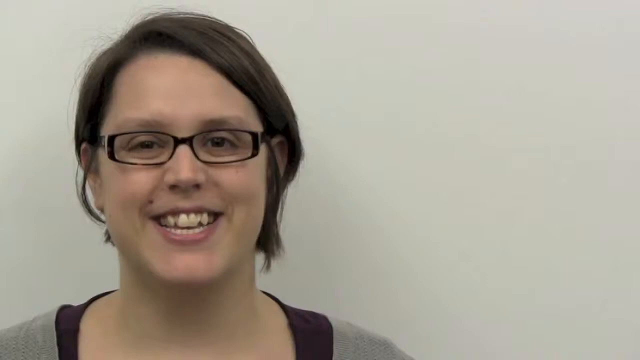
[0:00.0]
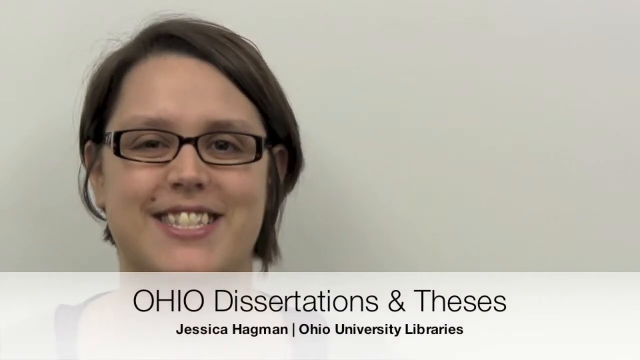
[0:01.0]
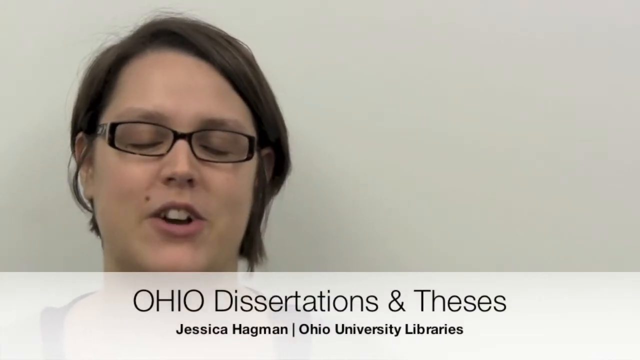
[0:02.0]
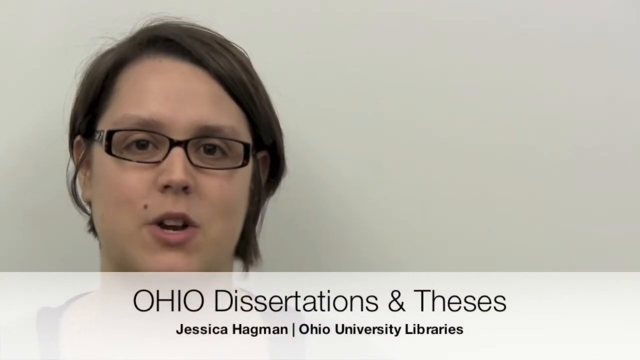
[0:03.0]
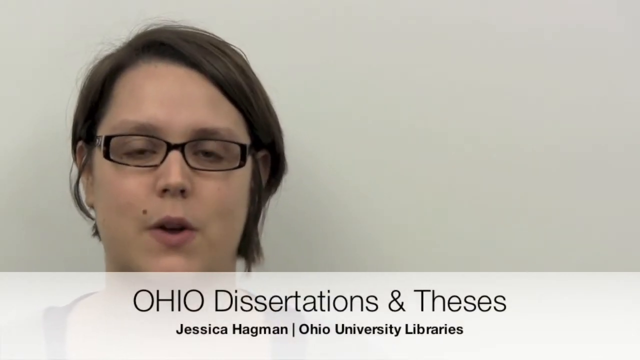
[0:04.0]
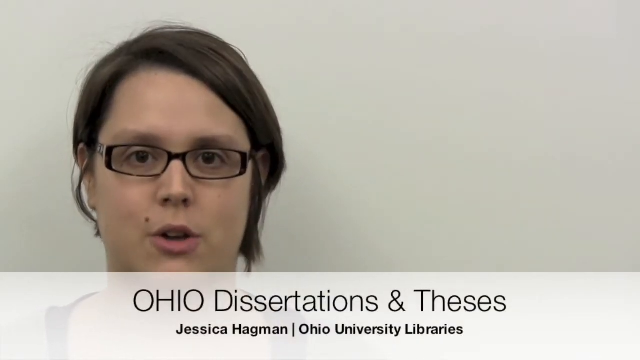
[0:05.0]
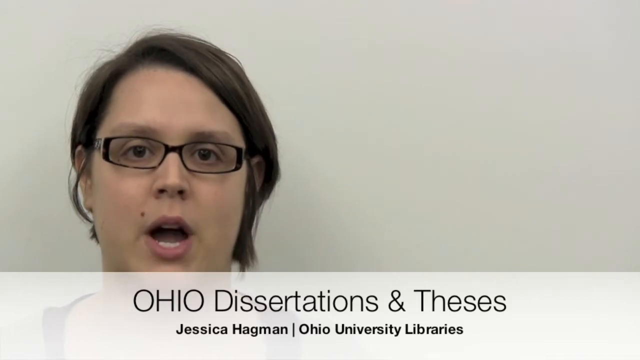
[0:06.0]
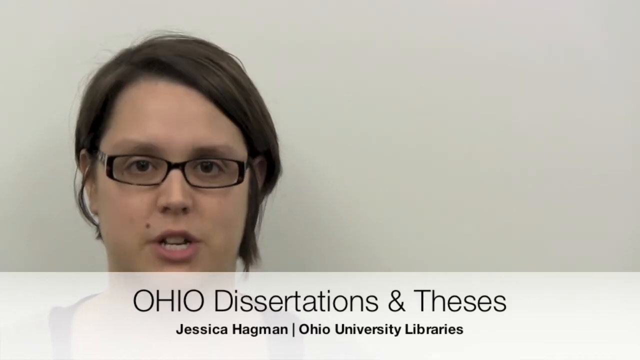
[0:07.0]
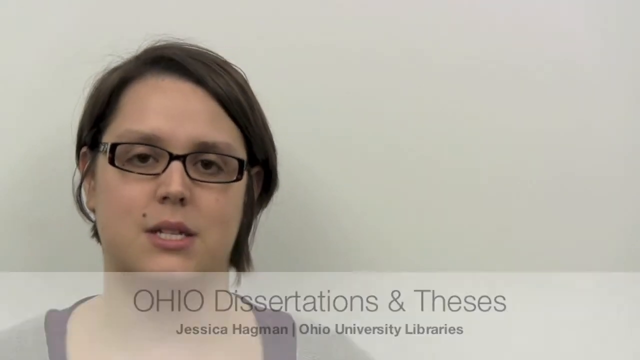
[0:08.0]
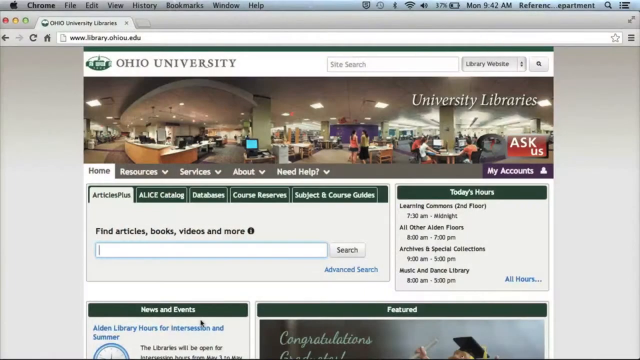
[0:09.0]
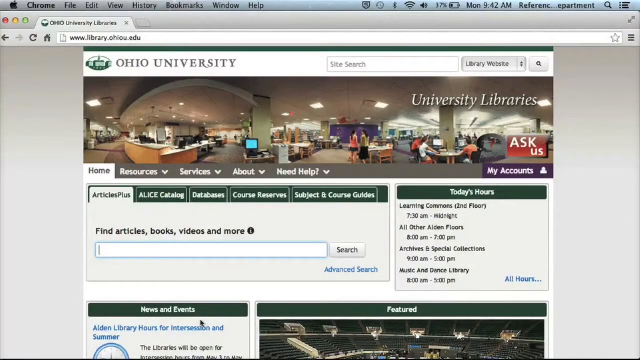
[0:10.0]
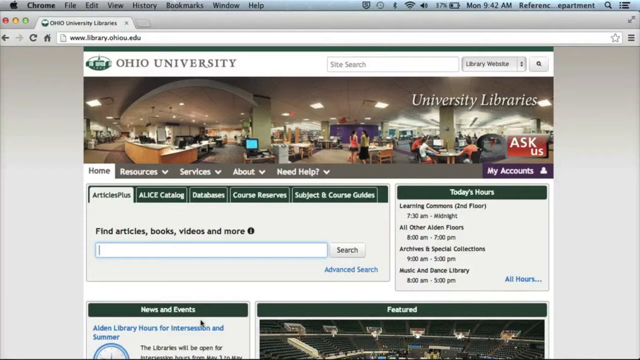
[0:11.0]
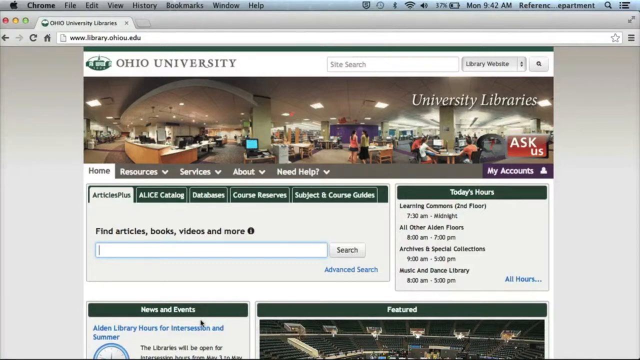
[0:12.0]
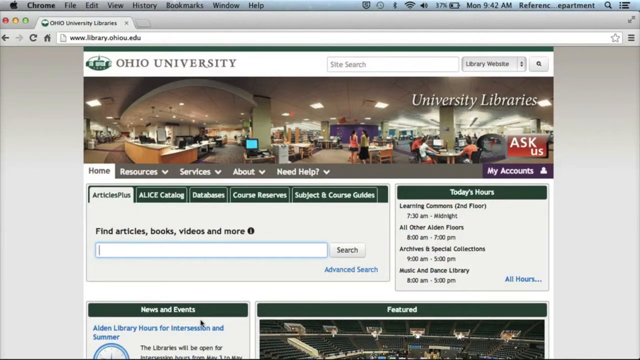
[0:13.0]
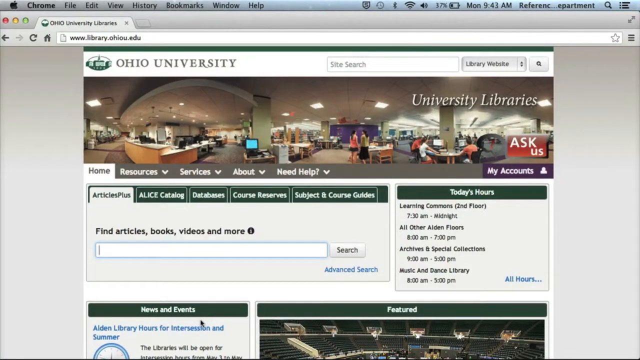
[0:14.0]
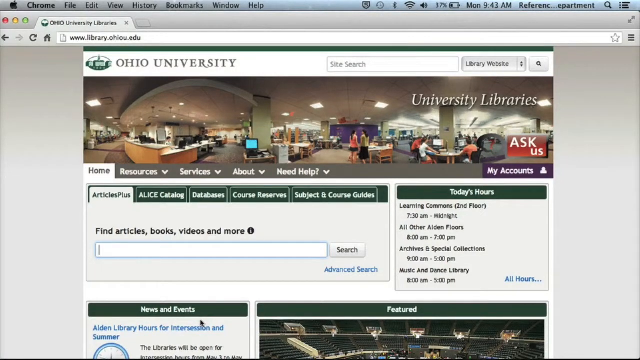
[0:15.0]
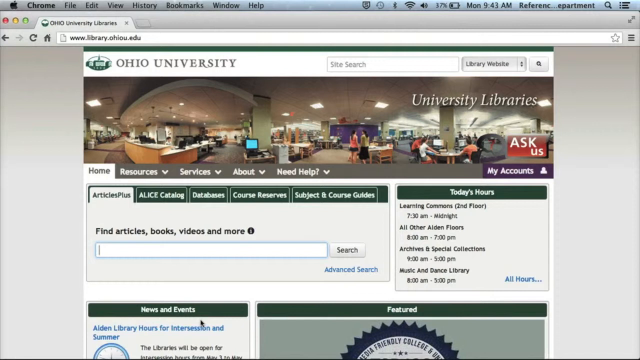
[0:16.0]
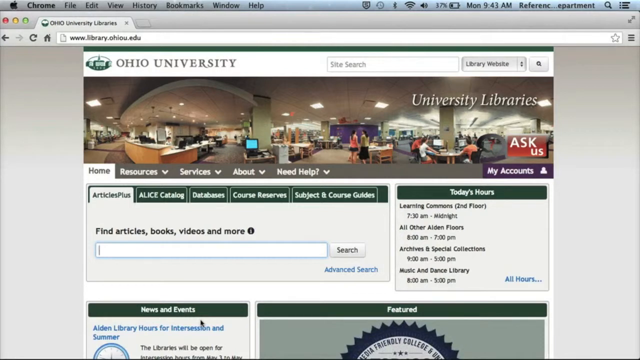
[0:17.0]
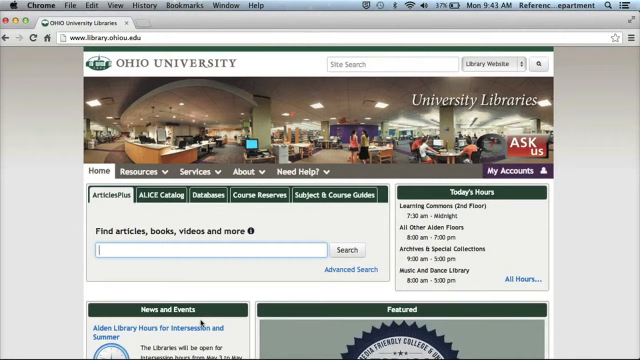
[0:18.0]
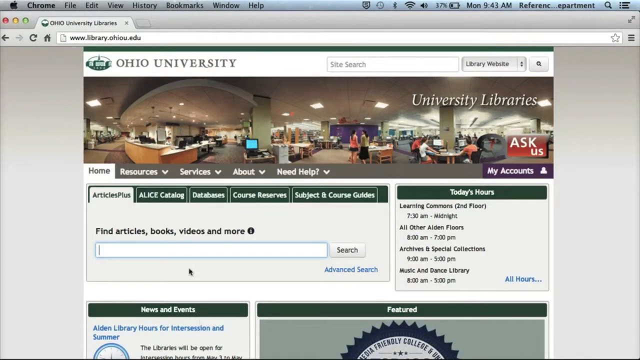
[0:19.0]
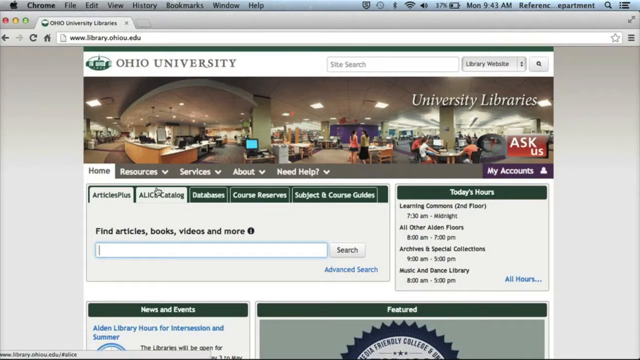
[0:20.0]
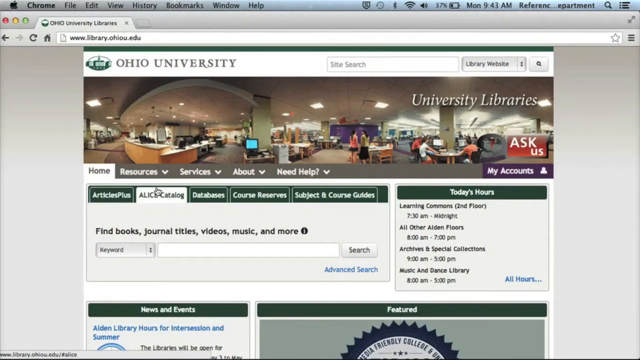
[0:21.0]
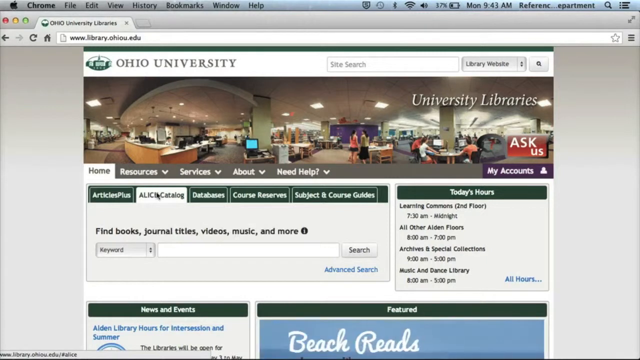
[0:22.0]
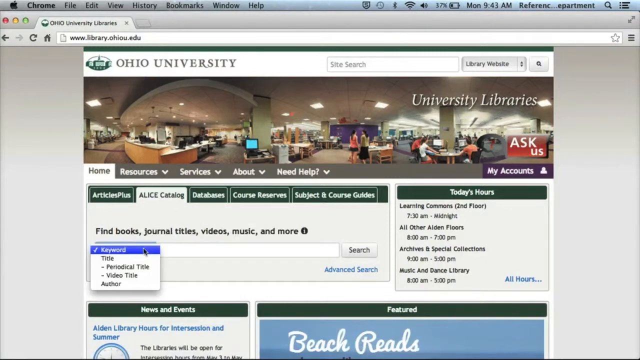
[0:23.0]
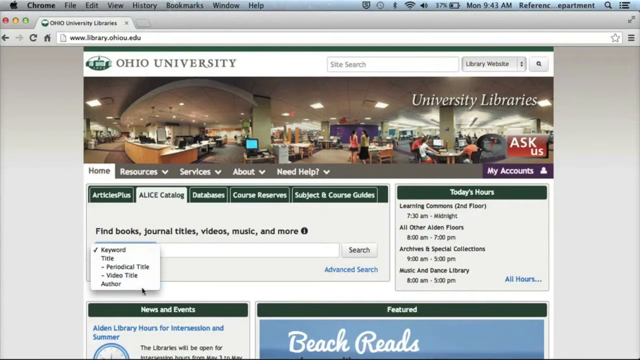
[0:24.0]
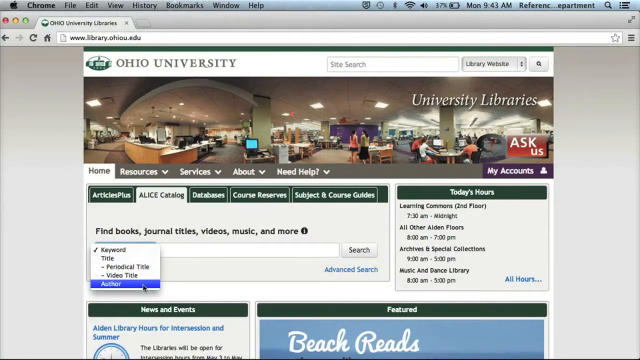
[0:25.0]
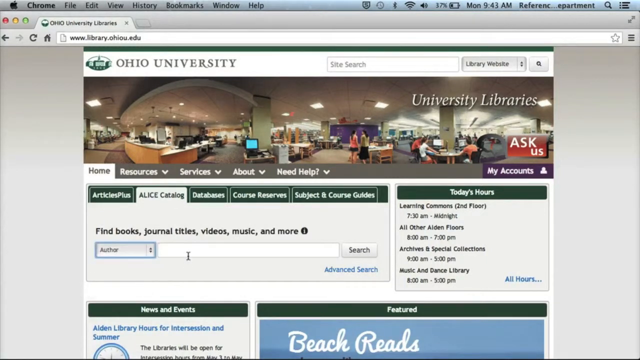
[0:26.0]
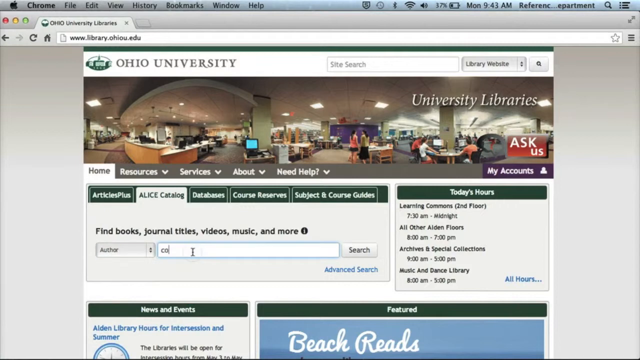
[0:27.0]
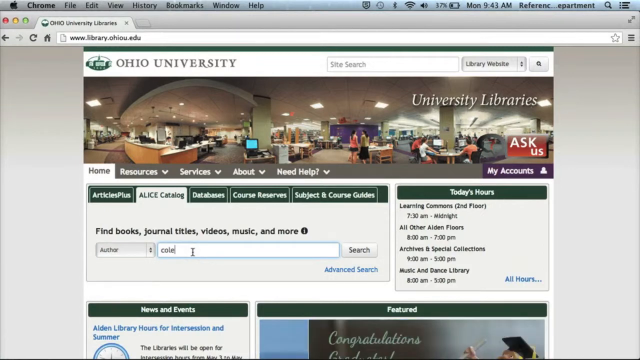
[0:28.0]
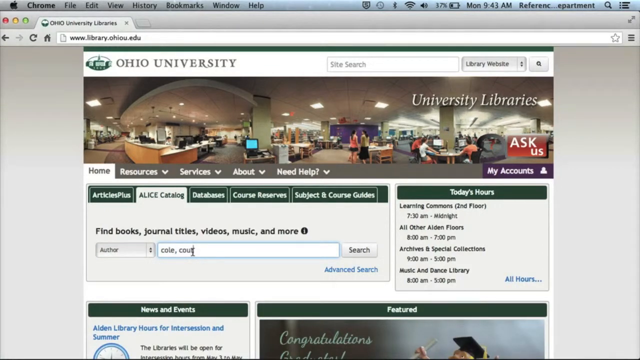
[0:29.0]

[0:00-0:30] A woman appears in the foreground against a grey background. Her short hair is probably an asymmetrical cut, appearing slightly longer on her left side, with the longest piece appearing shorter than chin length. She wears rectangular glasses with thick black frames, appears to have dark eyes, and her upper teeth appear slightly crowded and not perfectly straight. Only the top of her shoulders and up are visible, so her head takes up most of the height of the frame; she appears to wear a shirt that is dark blue around the neckline and grey elsewhere. Text pops up at the bottom of the screen on a slightly transparent white banner reading "Ohio dissertations and theses," with smaller text underneath reading "Jessica Hegman, Ohio University Libraries." The woman speaks directly to the camera. The entire frame is then replaced by the Ohio University Libraries webpage, with the cursor blinking in the search bar. There is some animation in the featured section, but only its top part is visible, so the animation is unclear. The mouse pointer clicks a button labeled "Alice Catalog," and the function below changes to read "find books, journal titles, videos, music, and more." The mouse moves to the keyword button and clicks it, opening a drop-down menu. The pointer moves over the options until it hovers over "author"; hovered options turn blue with white text instead of black. Author is clicked, then the mouse moves to the search bar, clicks inside it, and "cole, courtney" is typed.